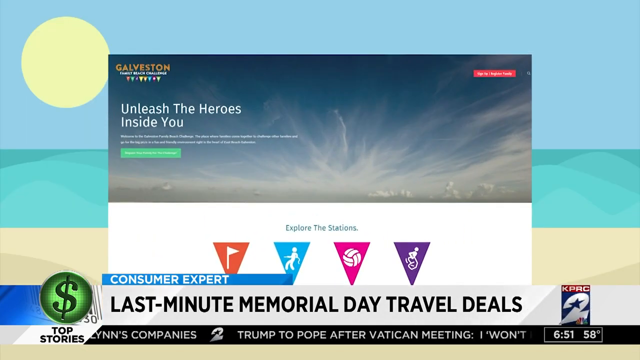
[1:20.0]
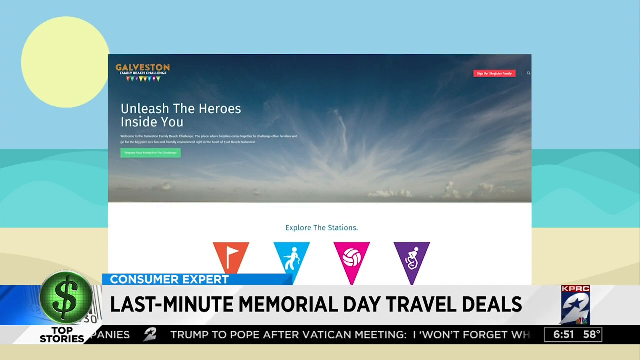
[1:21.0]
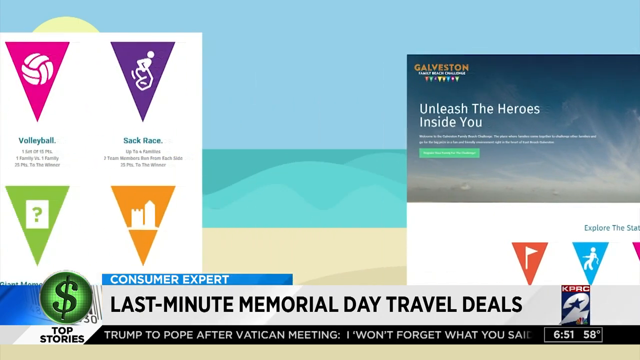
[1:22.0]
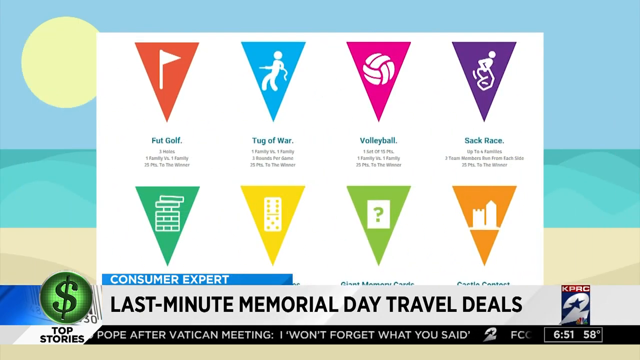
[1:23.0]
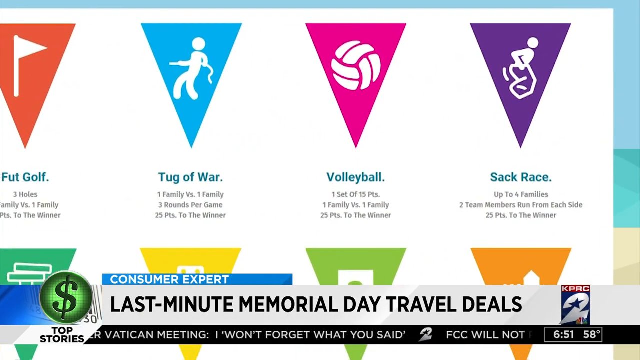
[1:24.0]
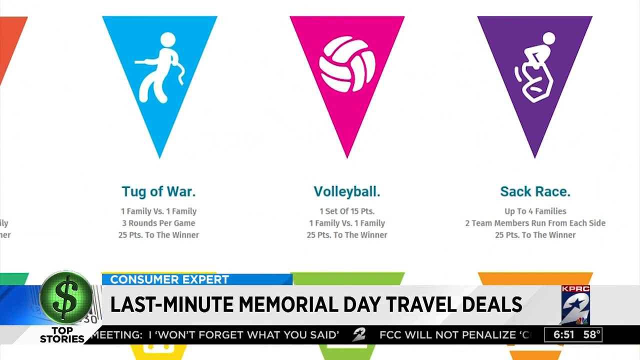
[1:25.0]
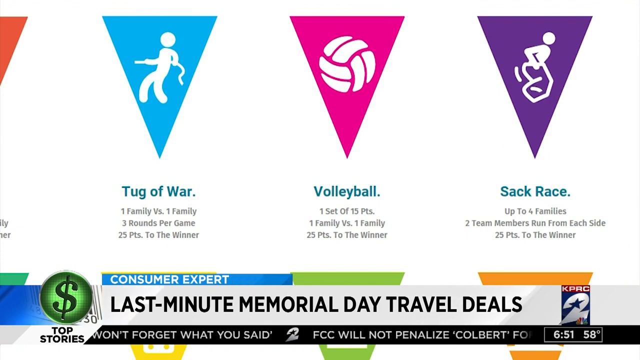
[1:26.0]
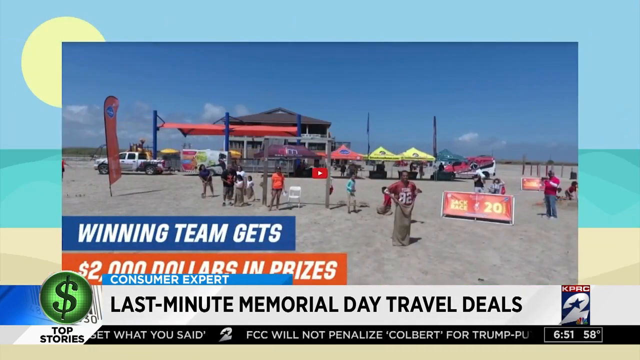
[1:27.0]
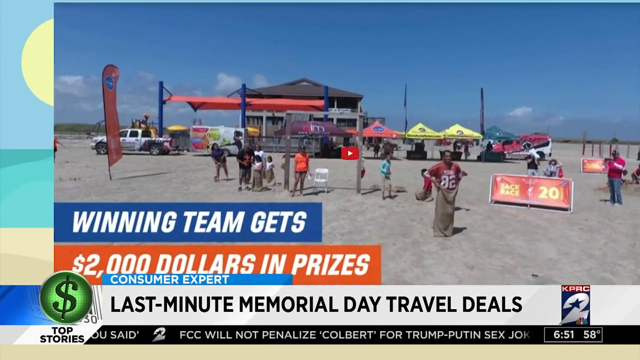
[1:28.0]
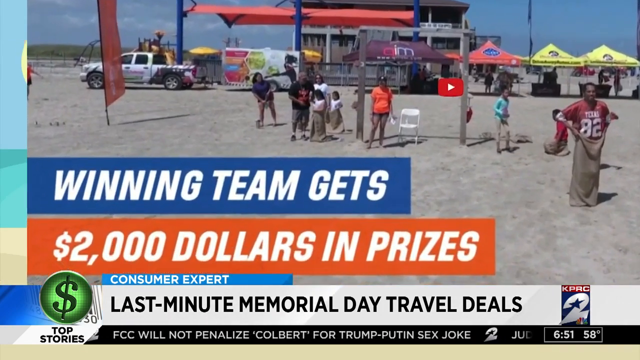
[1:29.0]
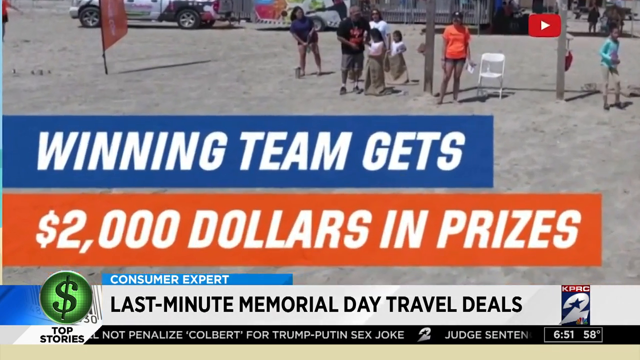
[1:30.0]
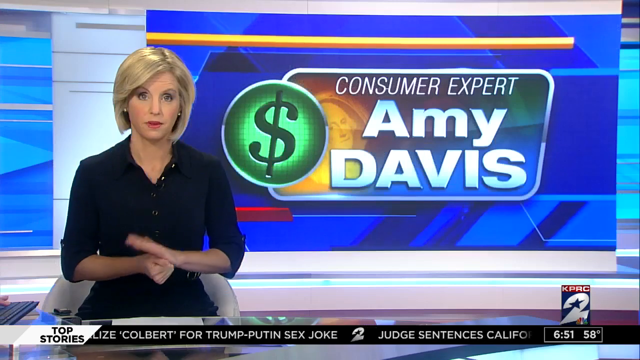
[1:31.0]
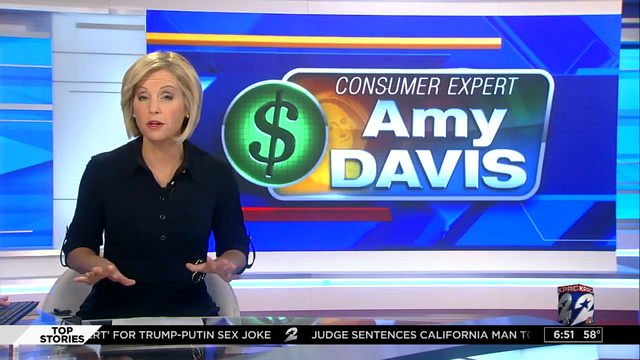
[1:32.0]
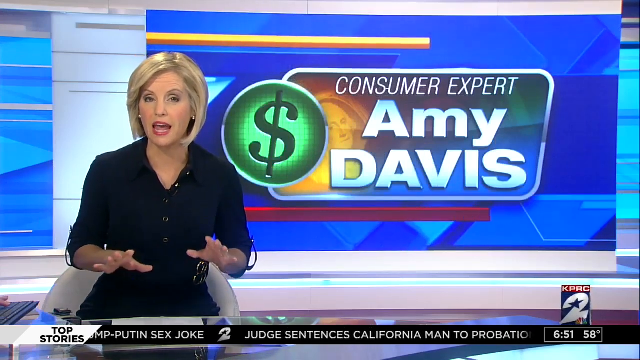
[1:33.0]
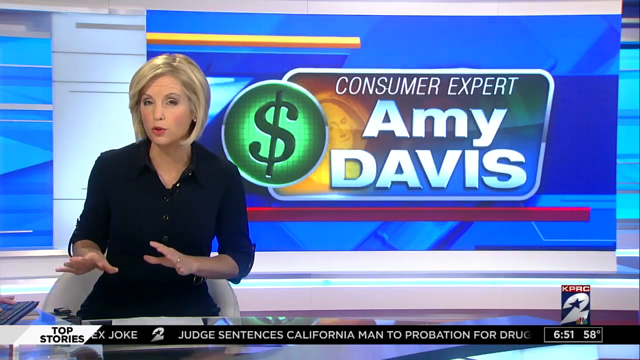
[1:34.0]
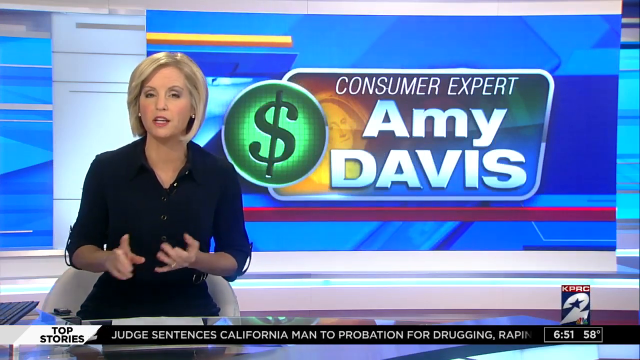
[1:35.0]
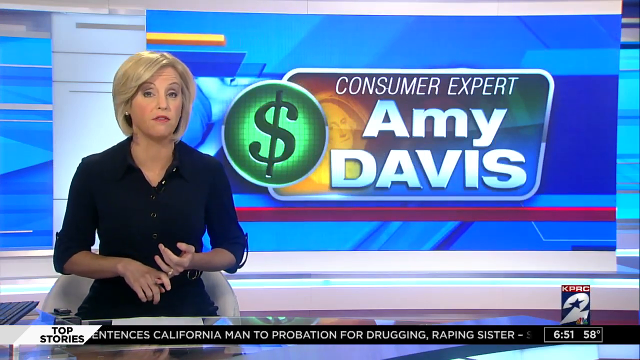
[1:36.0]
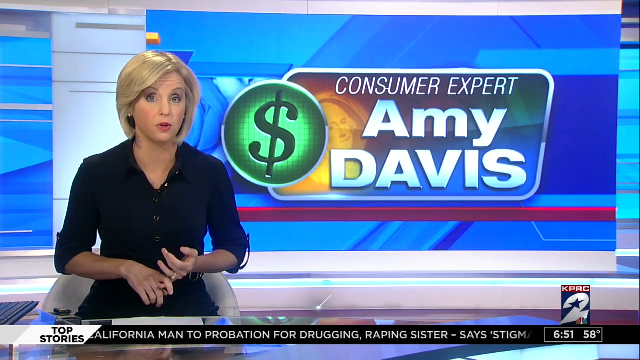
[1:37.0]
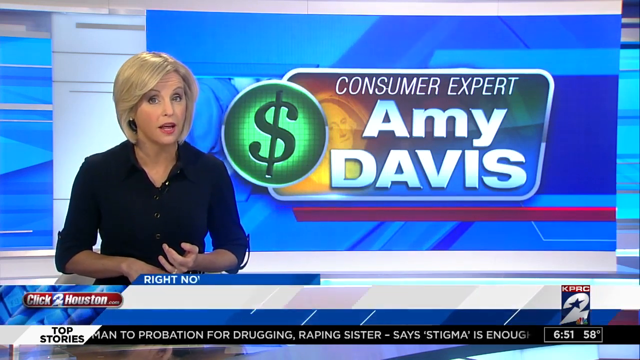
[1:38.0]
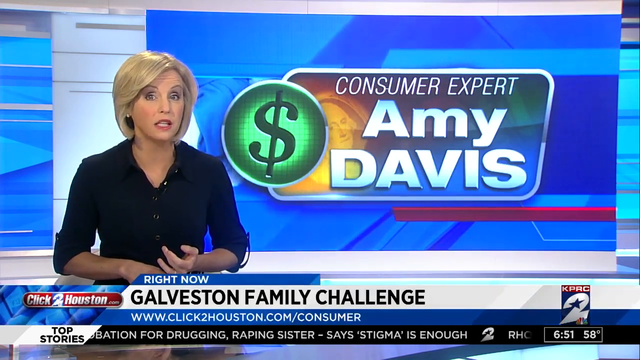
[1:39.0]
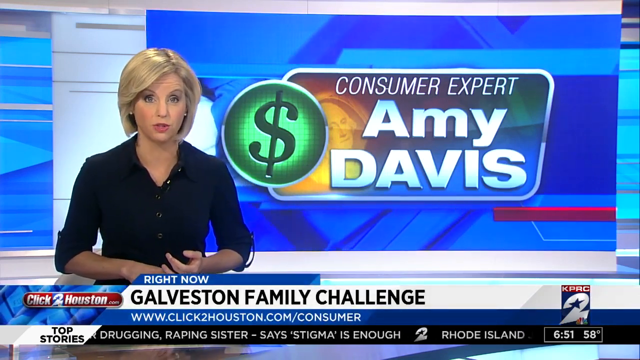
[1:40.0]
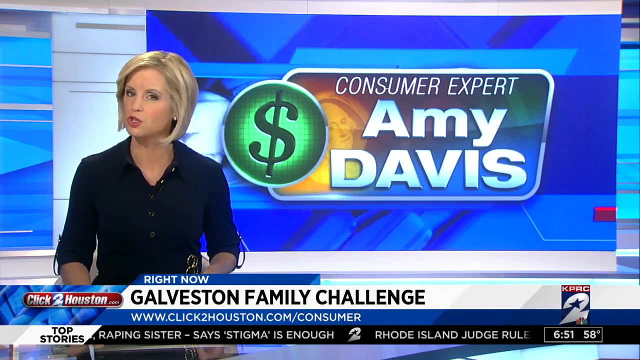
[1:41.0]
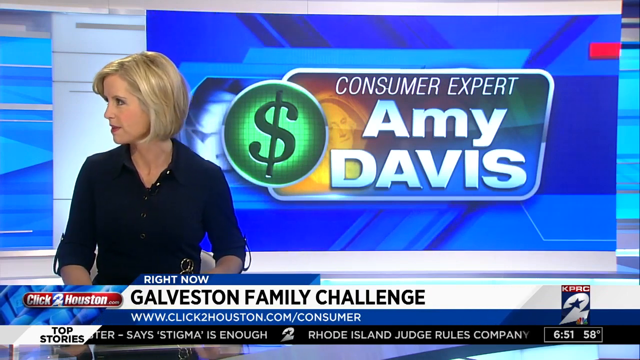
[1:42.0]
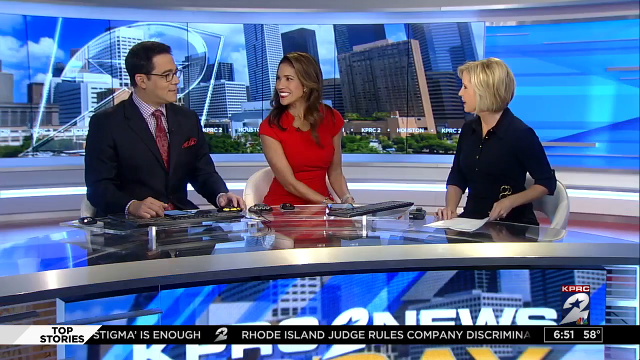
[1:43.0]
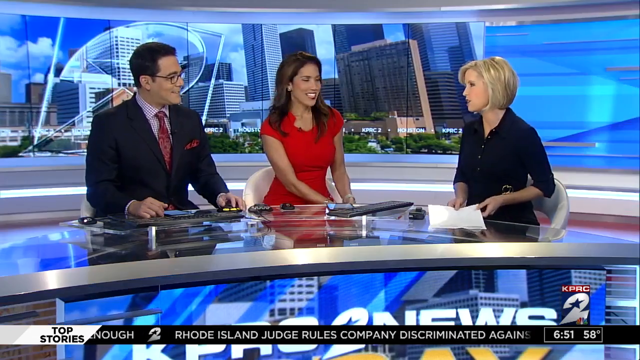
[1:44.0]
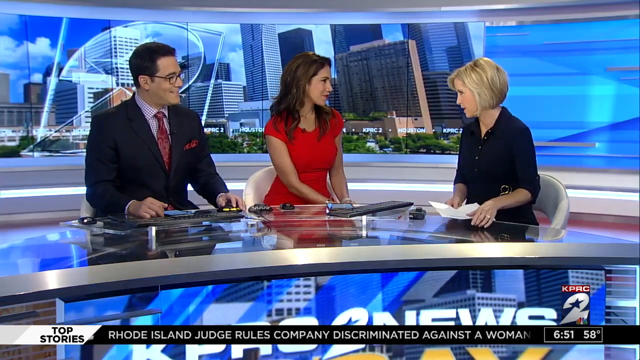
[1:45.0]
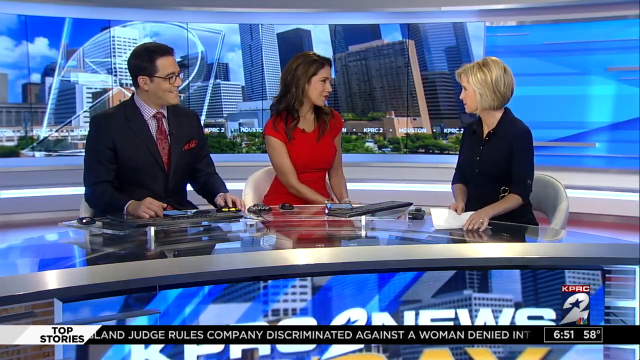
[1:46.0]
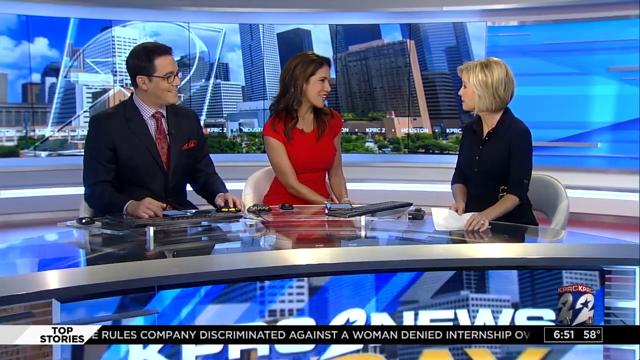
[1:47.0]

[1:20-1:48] The news report continues. At the beginning, the view scrolls over to a sort of activity screen listing things like fun golf, volleyball, tug of war, and sack race. It then cuts to a picture that says "winning team gets $2,000 in prizes," apparently for some sort of event to attend on Memorial Day. The video then cuts back to Amy Davis in a much closer view. She appears to wear light red lipstick and sort of shiny buttons, and she talks toward the viewer. She is also talking to the same woman and man seen at the beginning, who are on the left. This time she is sitting with them rather than standing to the right by herself, sitting exactly where the two hosts were.